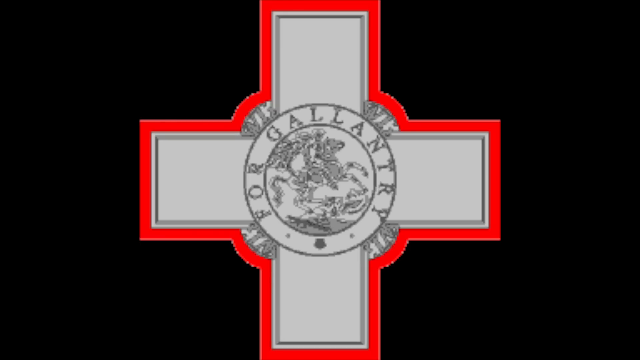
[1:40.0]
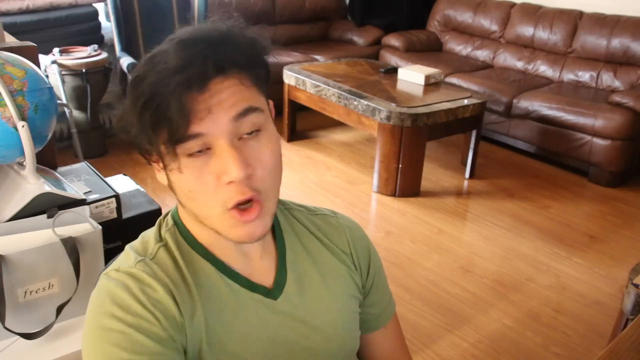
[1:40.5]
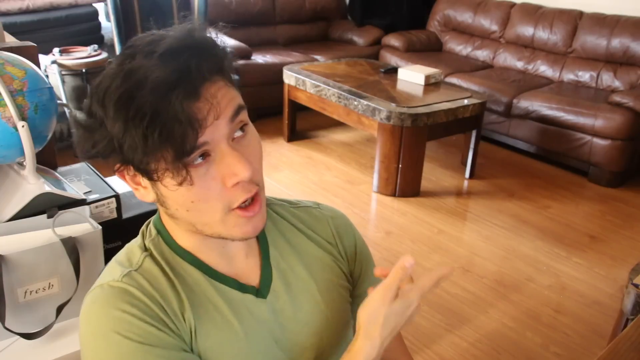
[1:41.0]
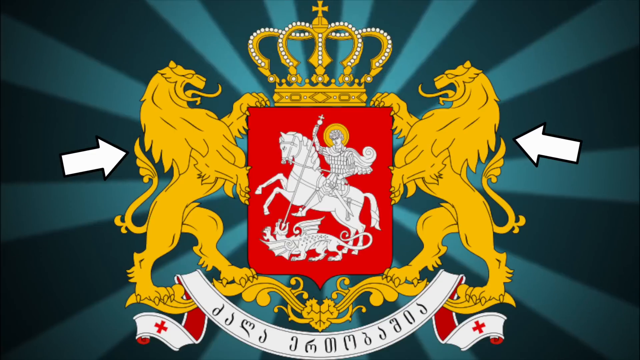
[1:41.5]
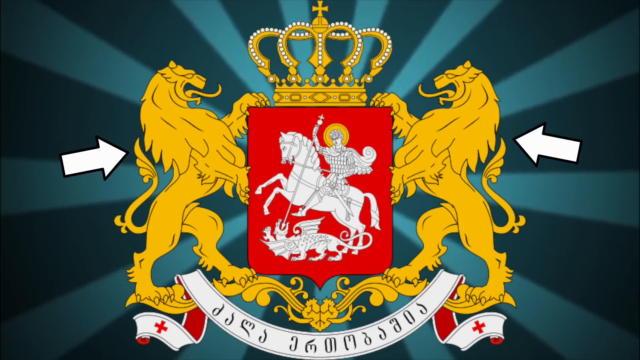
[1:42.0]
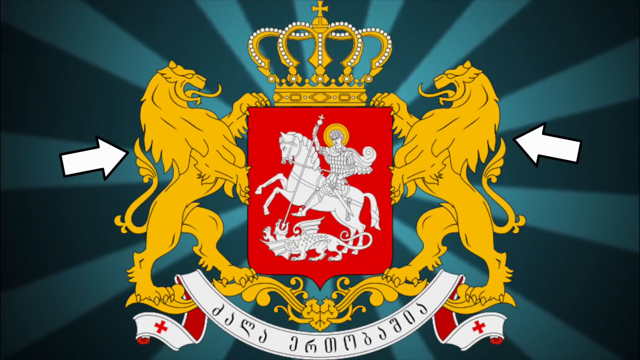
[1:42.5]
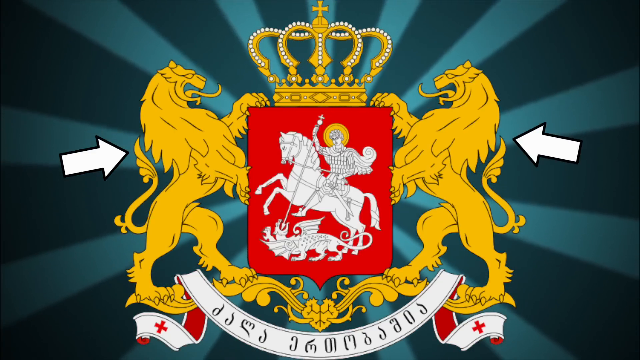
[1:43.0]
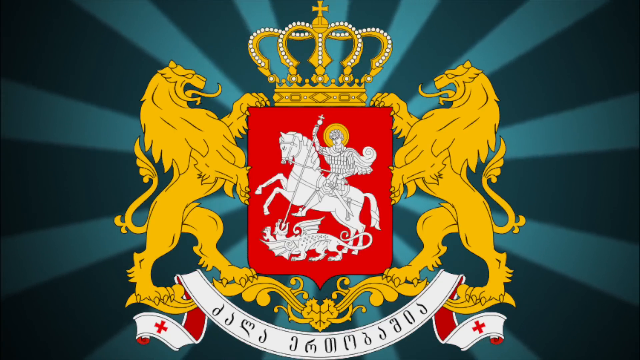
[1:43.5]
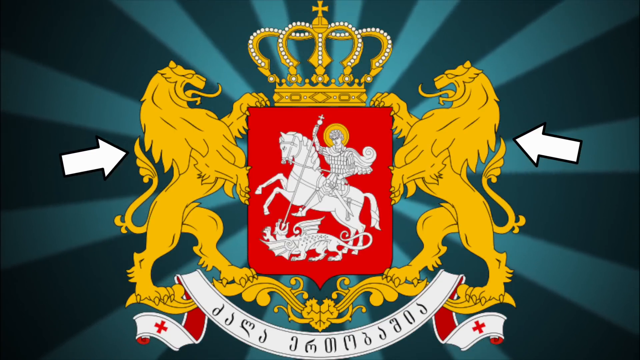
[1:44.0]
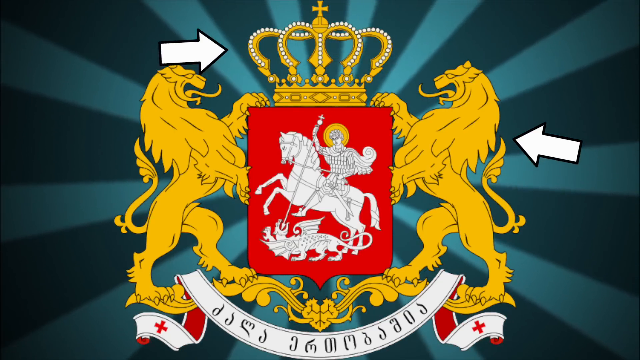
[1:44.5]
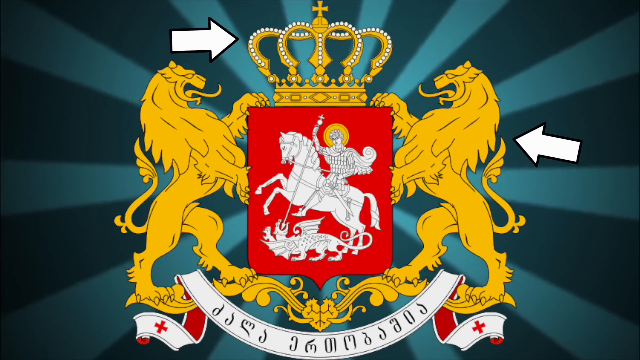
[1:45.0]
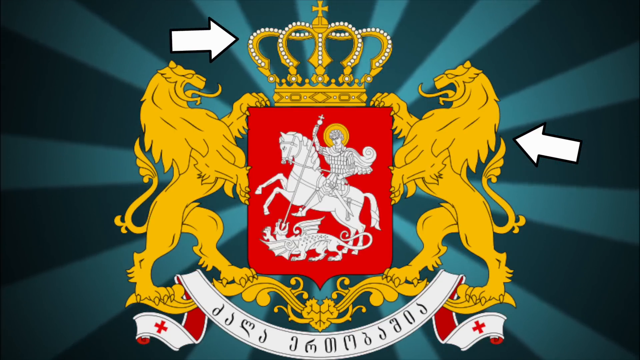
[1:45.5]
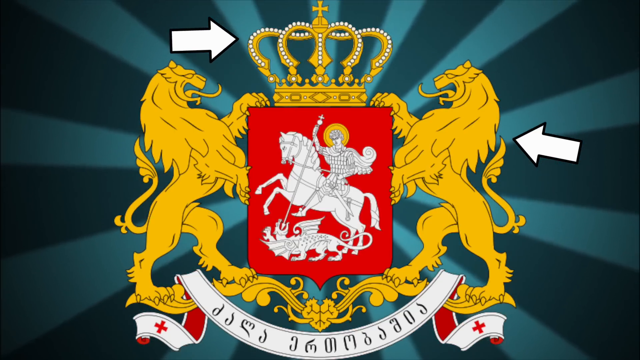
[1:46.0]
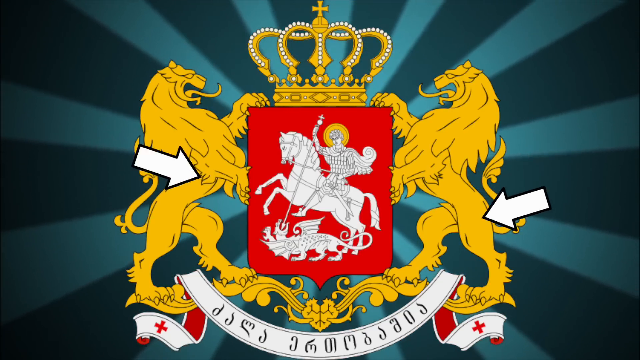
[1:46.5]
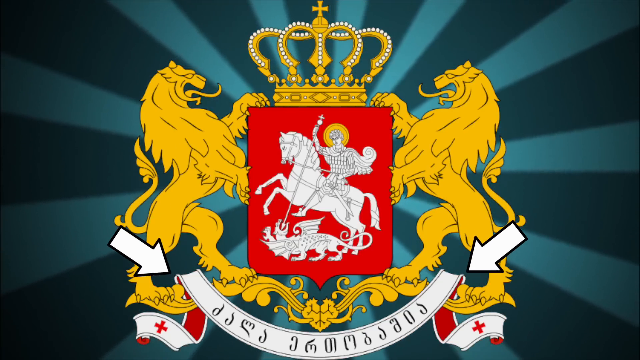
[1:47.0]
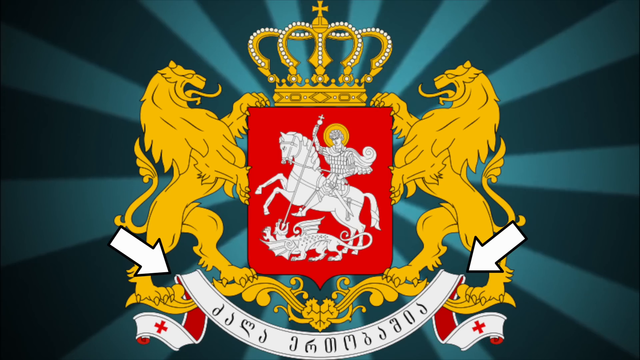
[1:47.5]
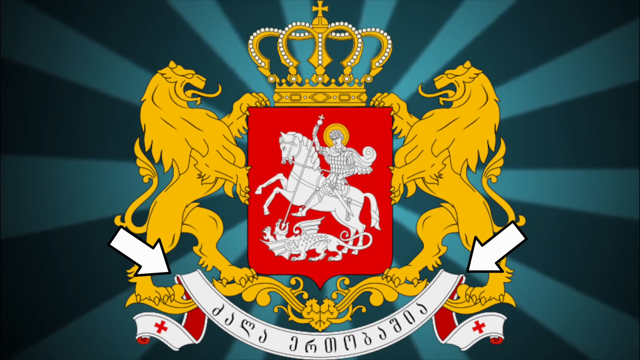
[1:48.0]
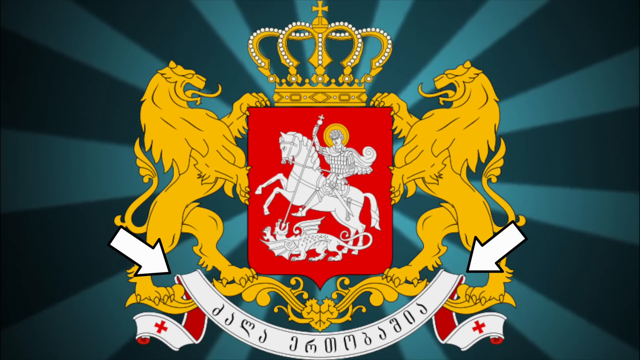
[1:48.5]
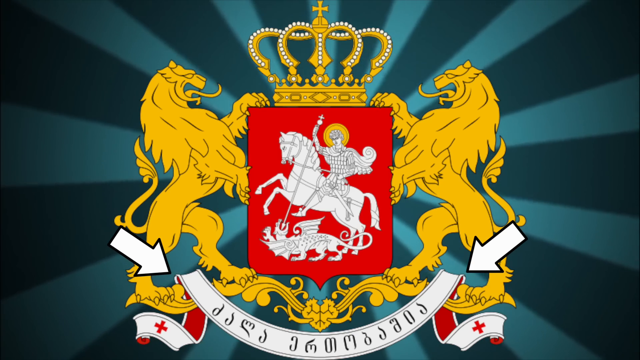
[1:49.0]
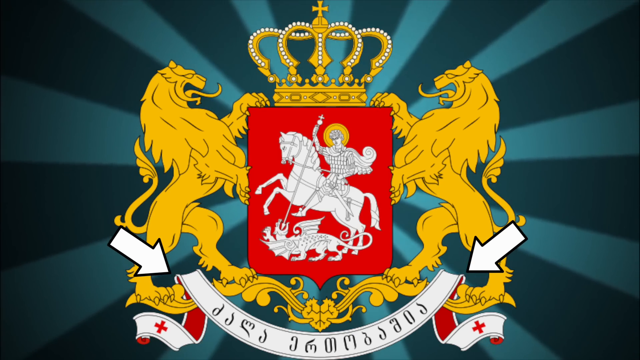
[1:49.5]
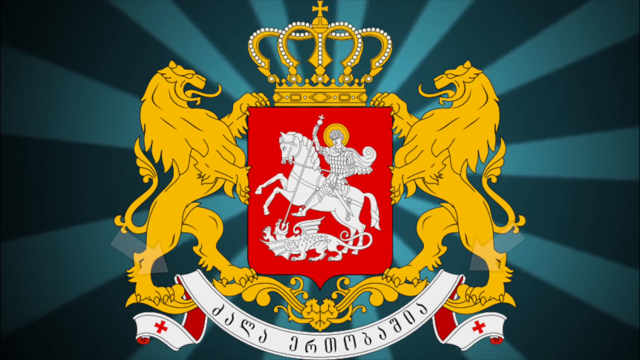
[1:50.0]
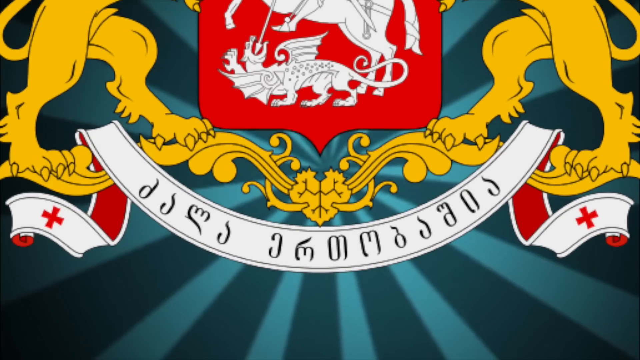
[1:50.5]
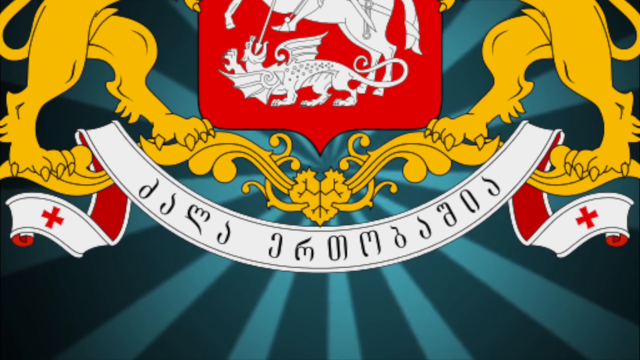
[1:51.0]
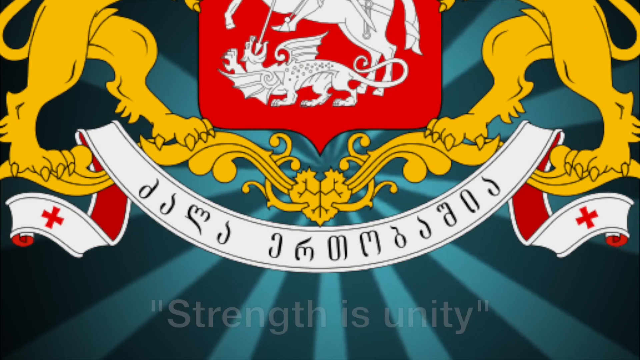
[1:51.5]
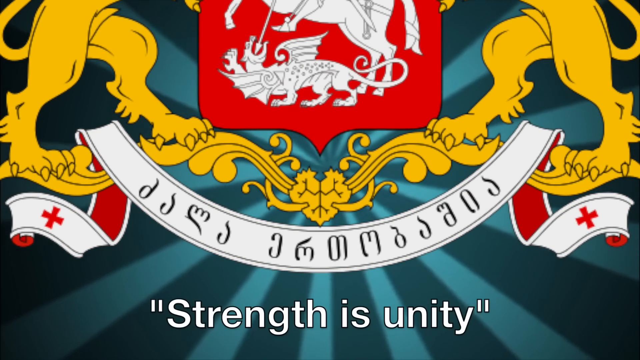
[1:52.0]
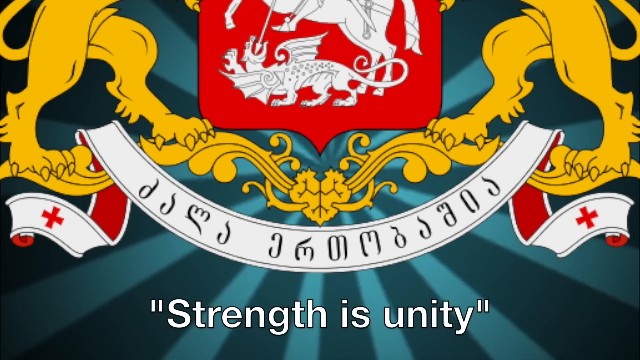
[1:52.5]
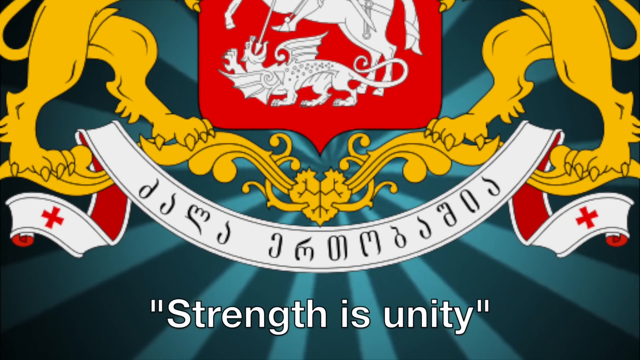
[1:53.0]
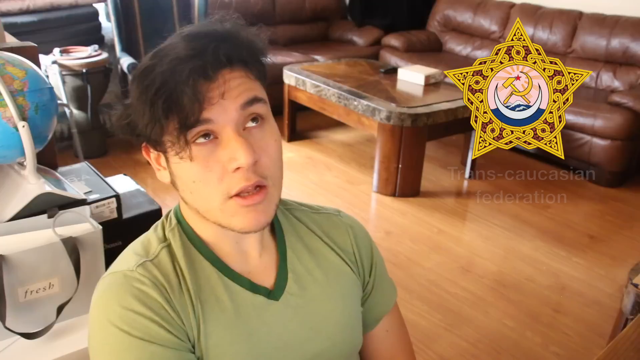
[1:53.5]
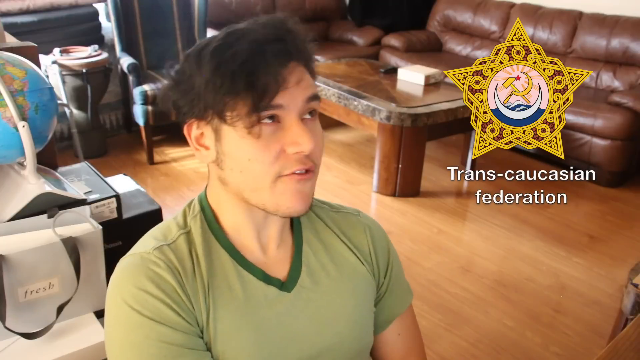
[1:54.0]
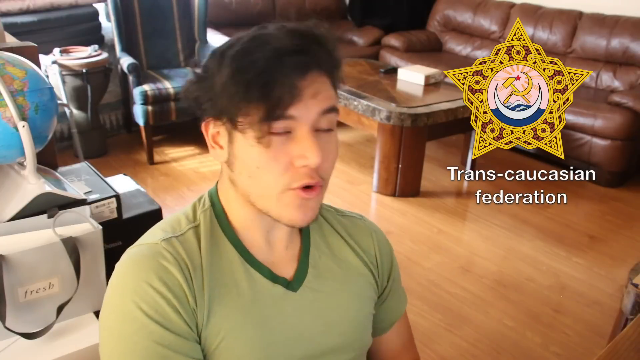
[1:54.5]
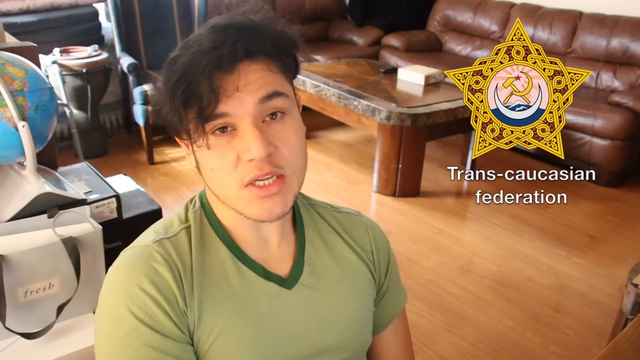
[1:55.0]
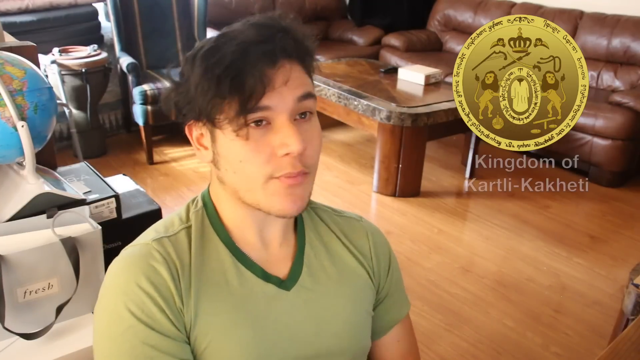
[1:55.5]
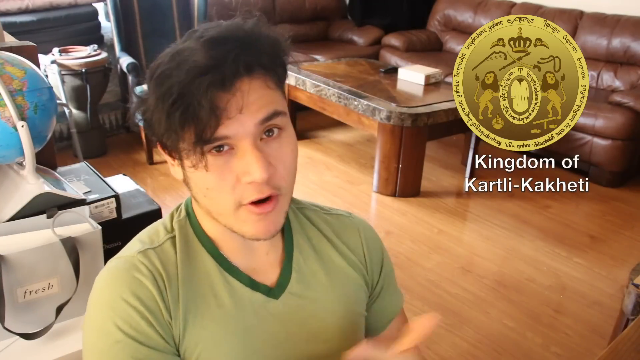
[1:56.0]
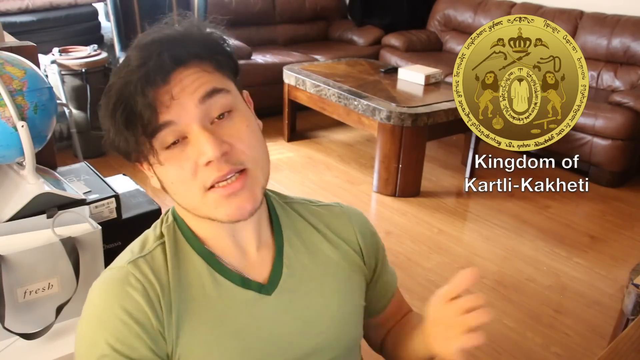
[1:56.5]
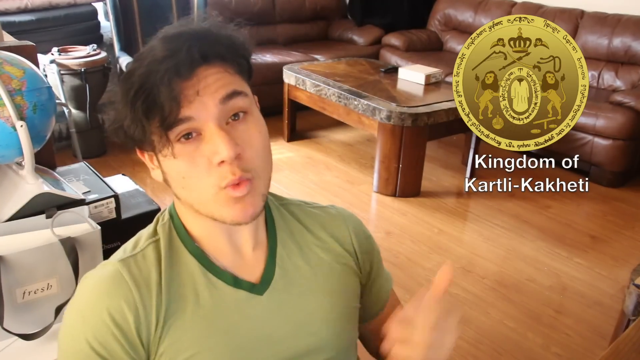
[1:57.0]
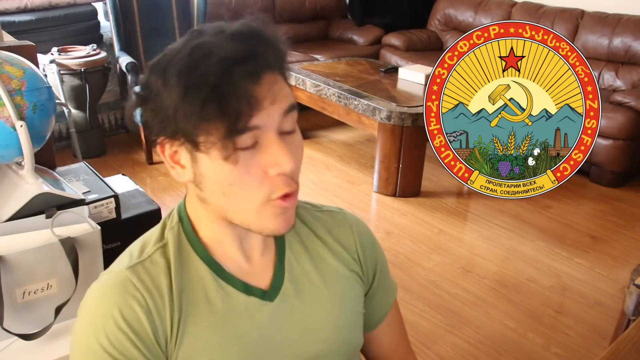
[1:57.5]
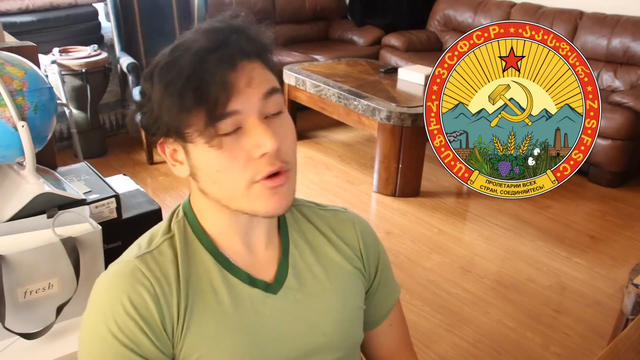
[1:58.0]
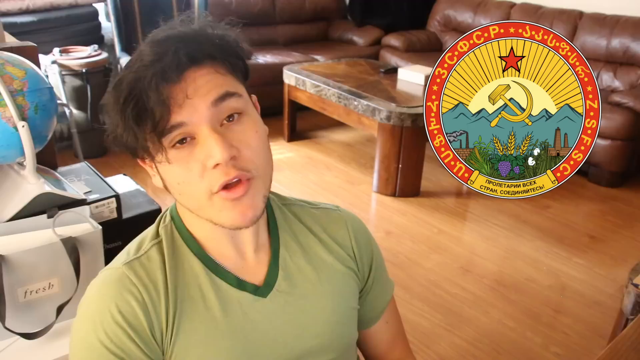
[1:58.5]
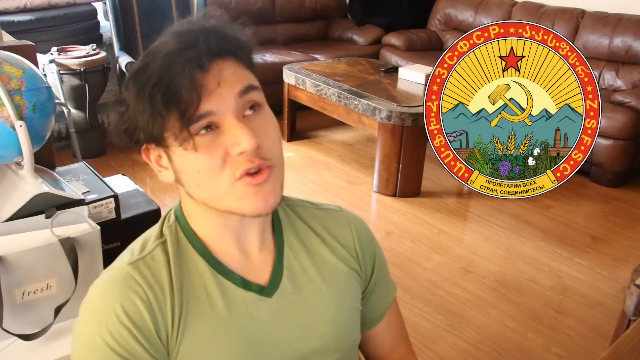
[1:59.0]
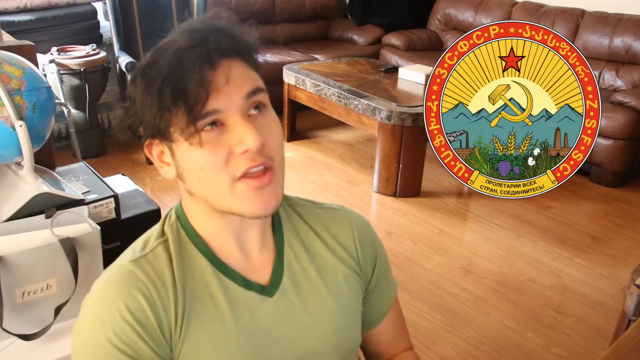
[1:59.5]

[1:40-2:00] On a black background there is a red and gray cross with an emblem in the middle. The scene then shows the Asian man talking, and the emblem with two lions on either side and a crown in between is visible. Arrows point at the two lions, one arrow points at the crown, and then arrows point to the bottom, where there is a message. The view zooms in, and the message reads "strength is unity"; it appears to be written in another language. The message is on a white ribbon with two red crosses on either side, intertwined with the lions' legs. The scene returns to the man talking, and a Trans-Caucasian Federation sign in the Kingdom of Keketi is shown, followed by another sign, this time in a circle.